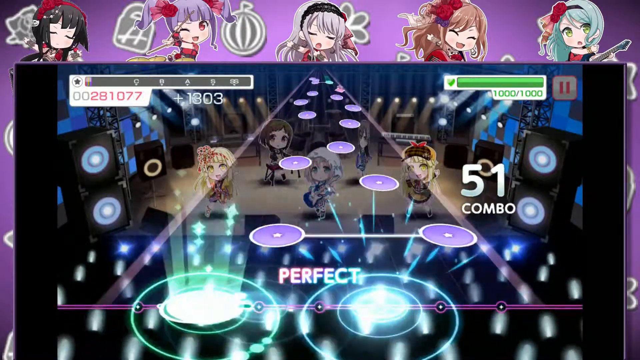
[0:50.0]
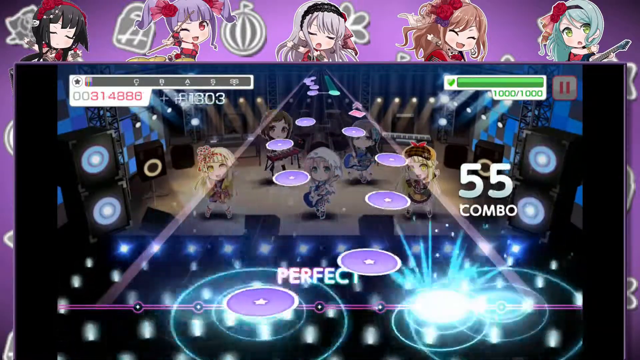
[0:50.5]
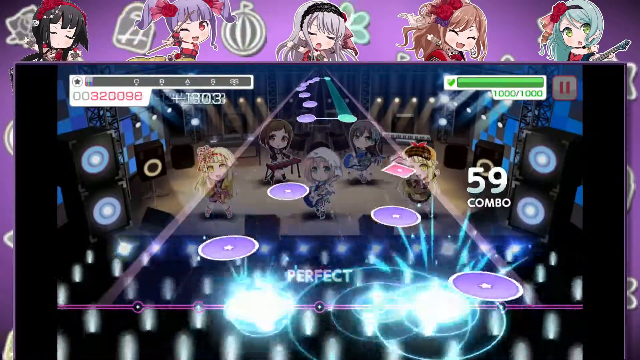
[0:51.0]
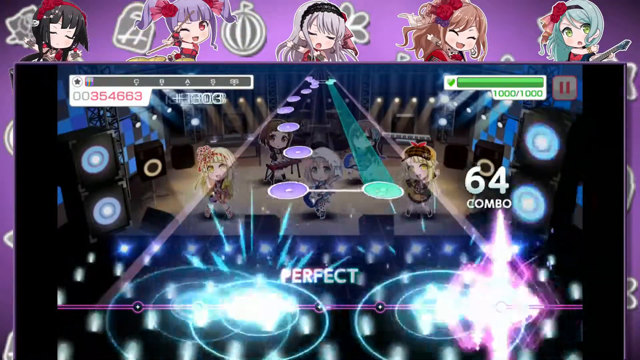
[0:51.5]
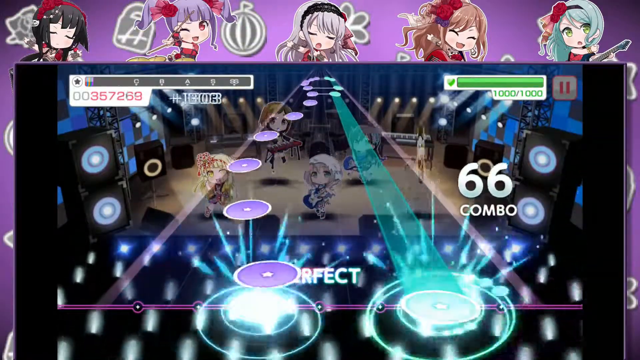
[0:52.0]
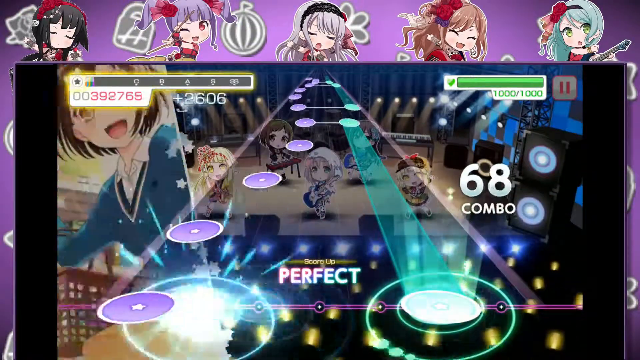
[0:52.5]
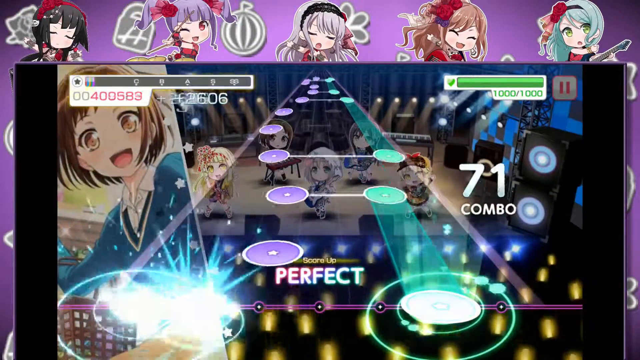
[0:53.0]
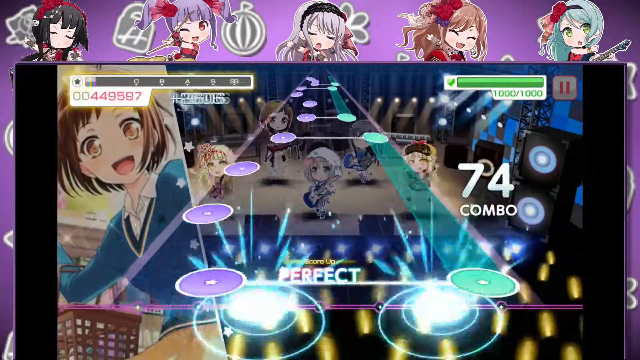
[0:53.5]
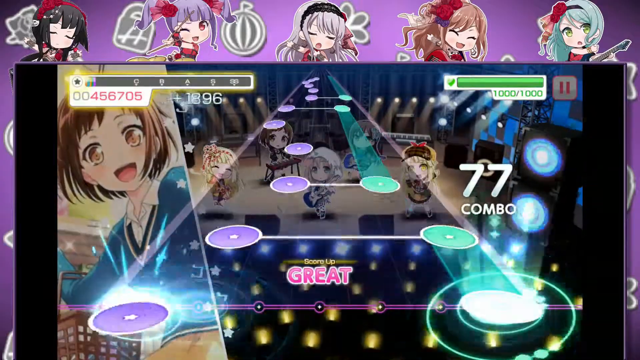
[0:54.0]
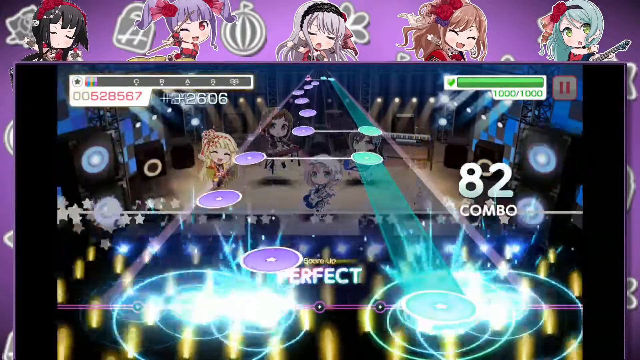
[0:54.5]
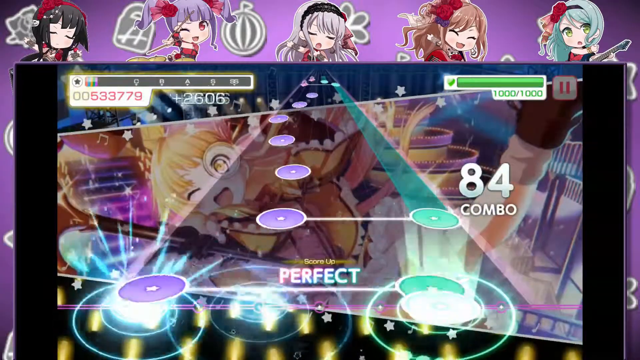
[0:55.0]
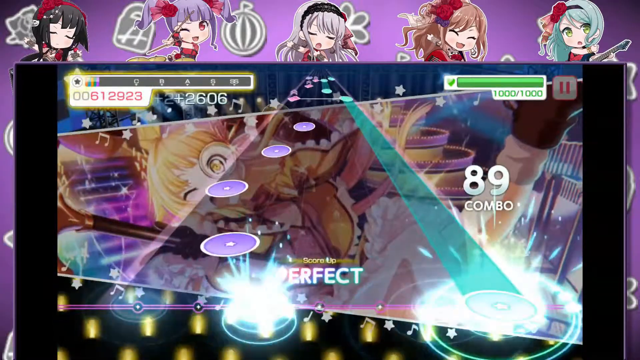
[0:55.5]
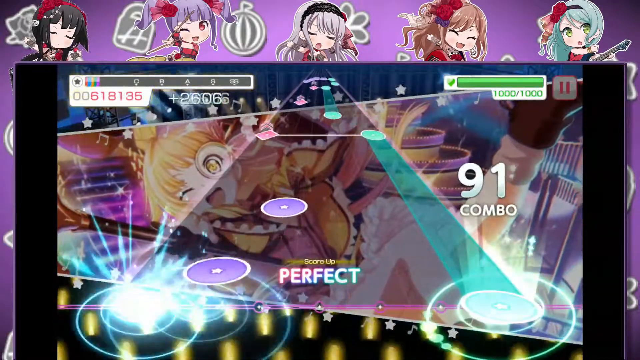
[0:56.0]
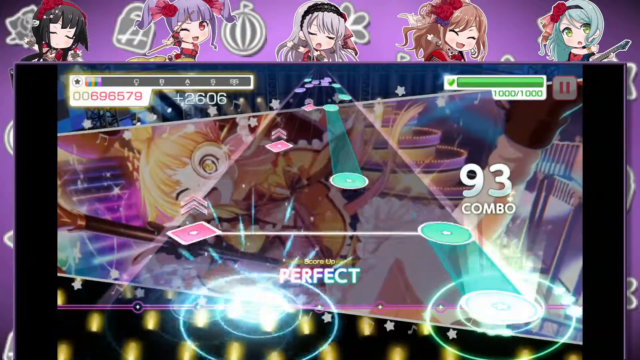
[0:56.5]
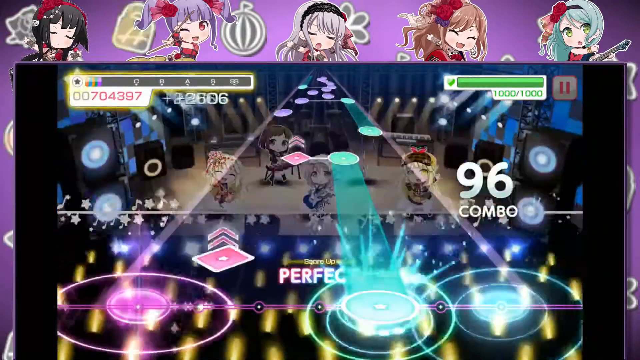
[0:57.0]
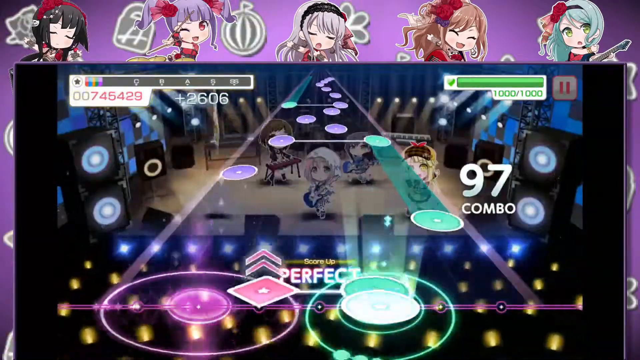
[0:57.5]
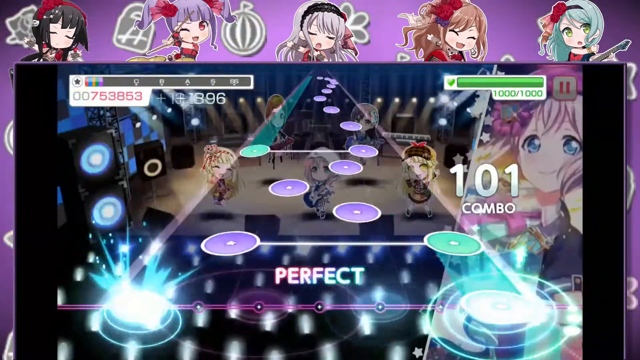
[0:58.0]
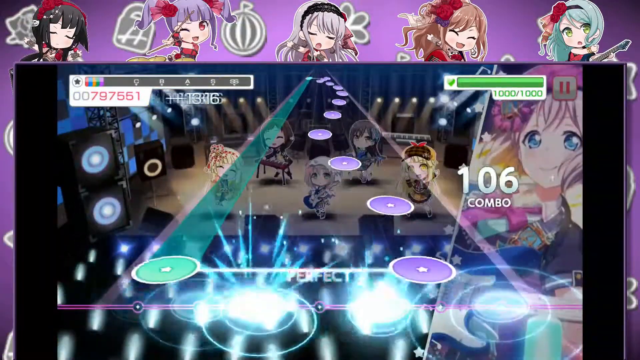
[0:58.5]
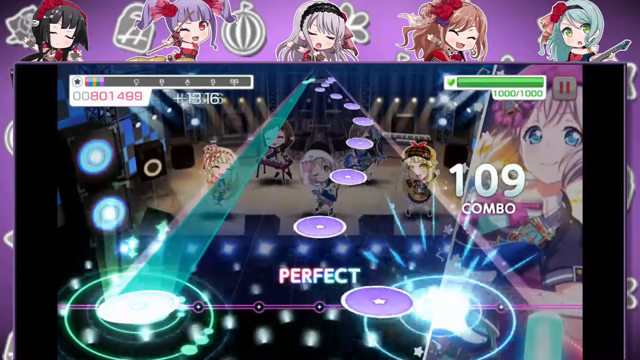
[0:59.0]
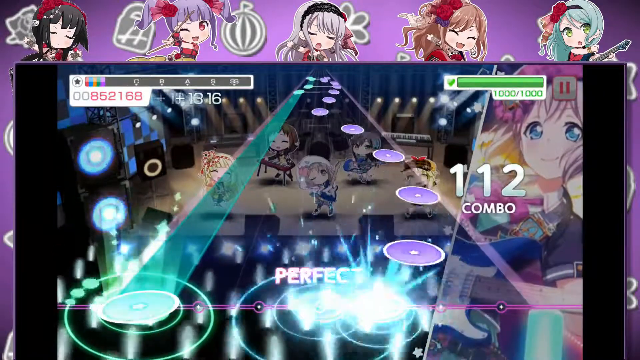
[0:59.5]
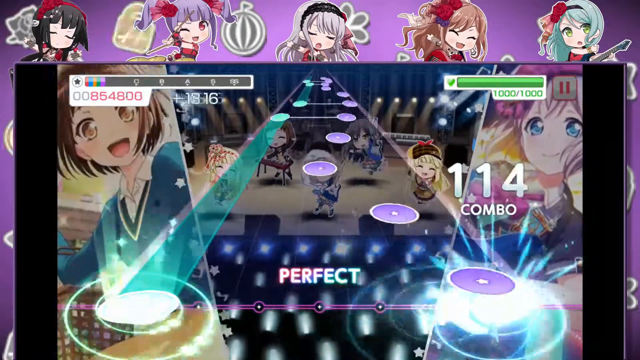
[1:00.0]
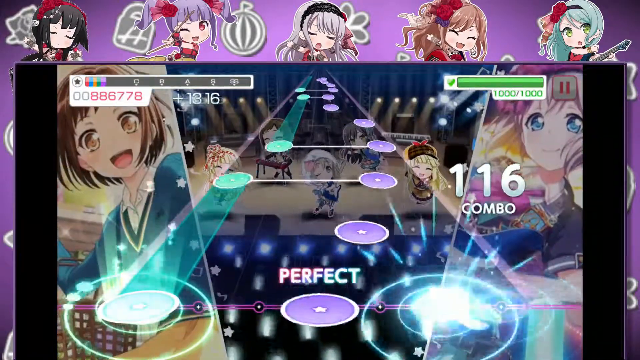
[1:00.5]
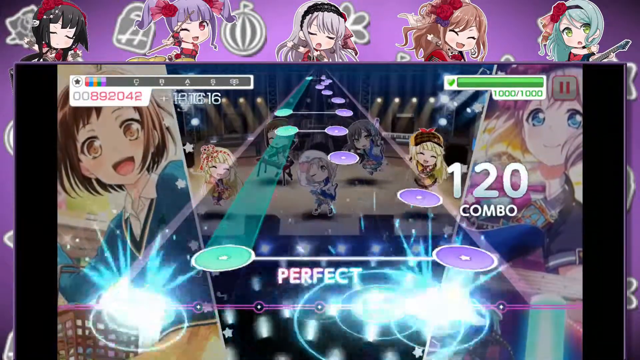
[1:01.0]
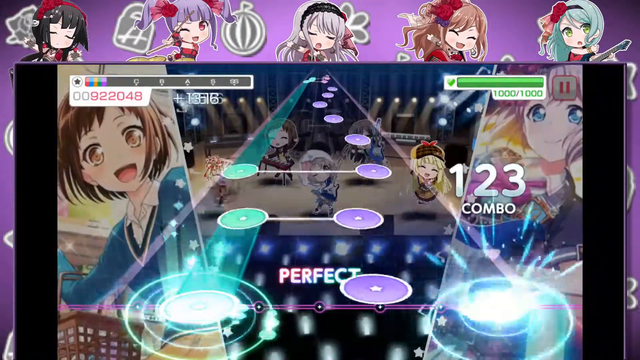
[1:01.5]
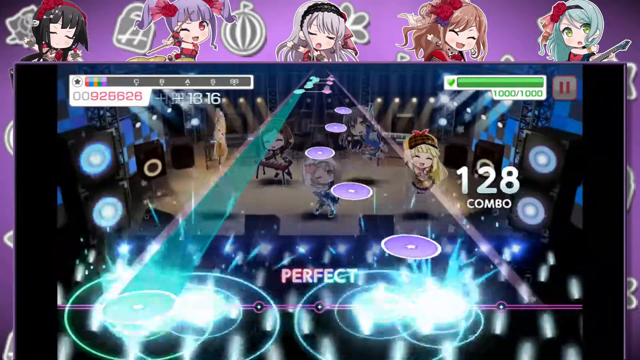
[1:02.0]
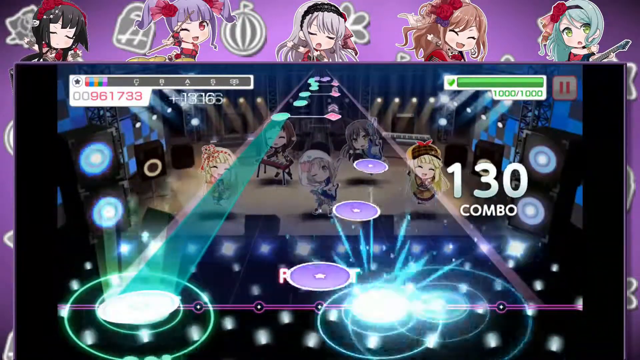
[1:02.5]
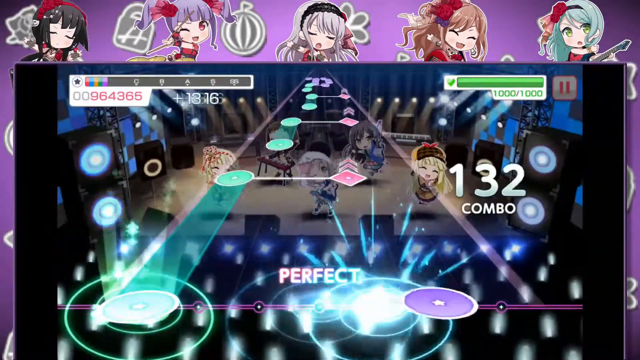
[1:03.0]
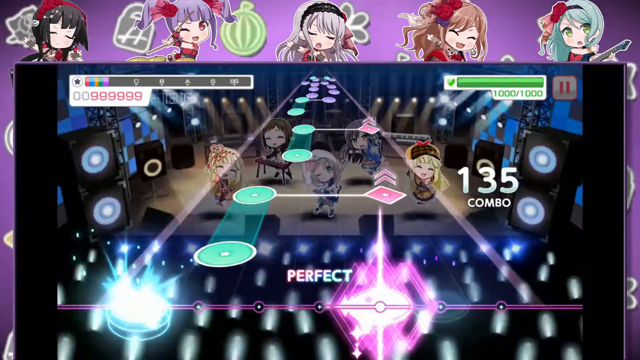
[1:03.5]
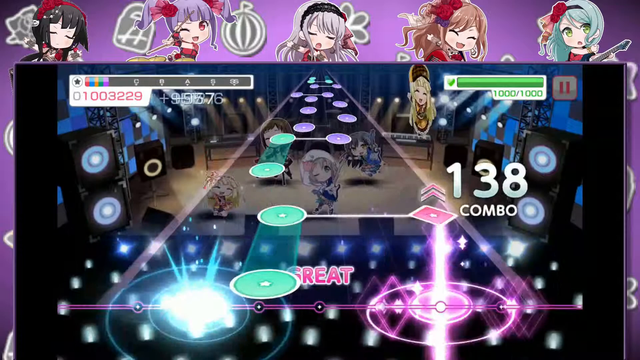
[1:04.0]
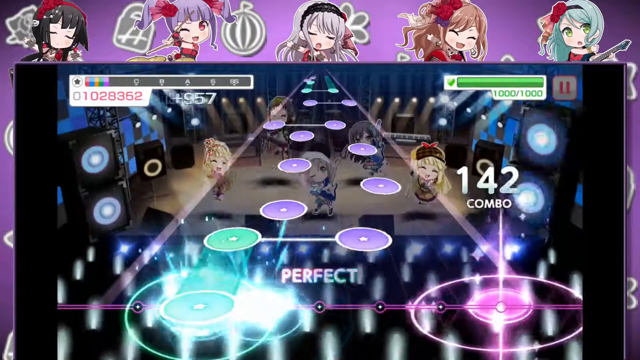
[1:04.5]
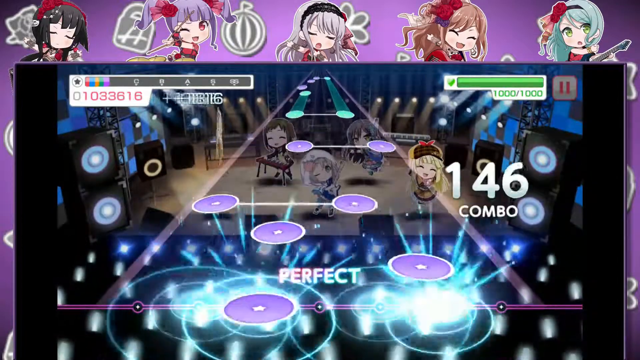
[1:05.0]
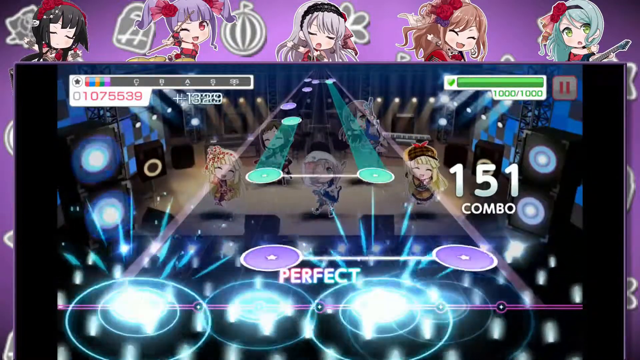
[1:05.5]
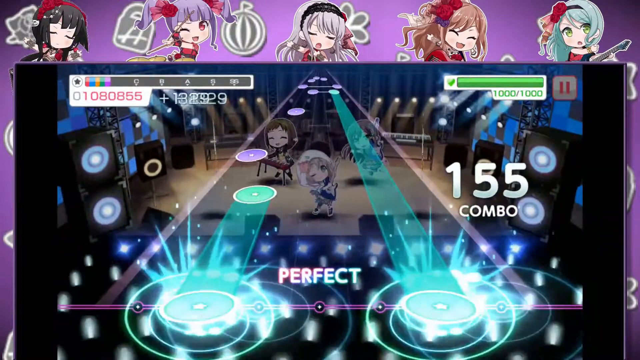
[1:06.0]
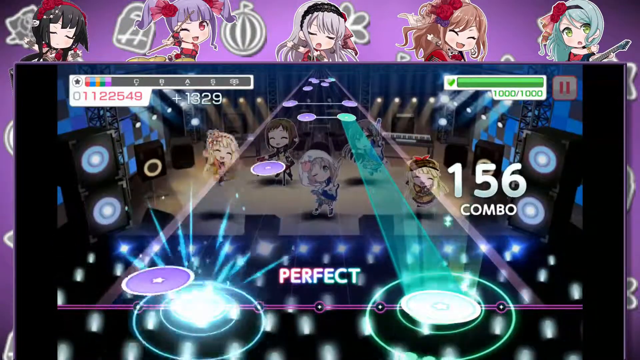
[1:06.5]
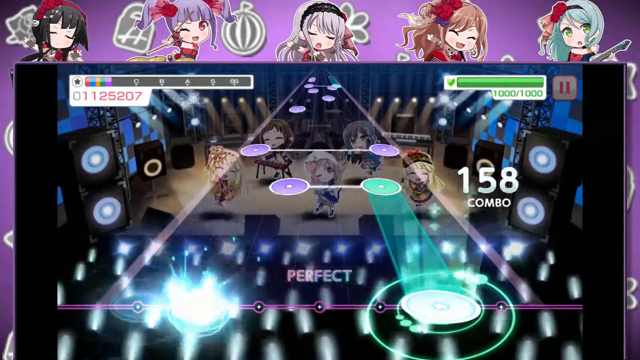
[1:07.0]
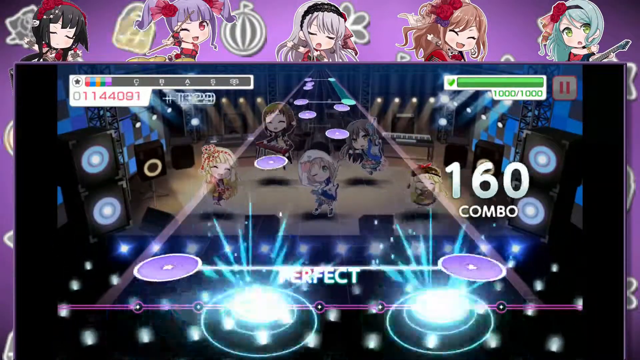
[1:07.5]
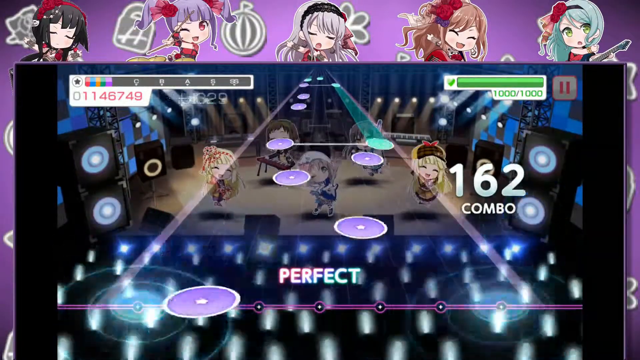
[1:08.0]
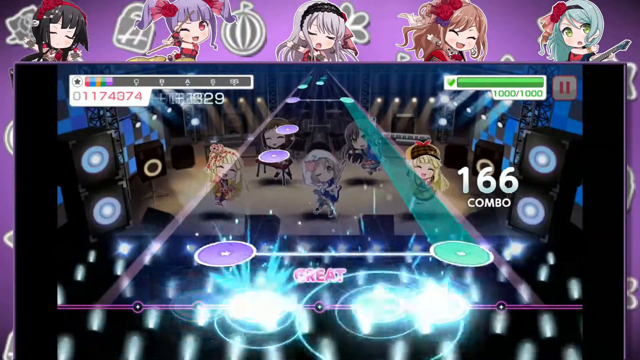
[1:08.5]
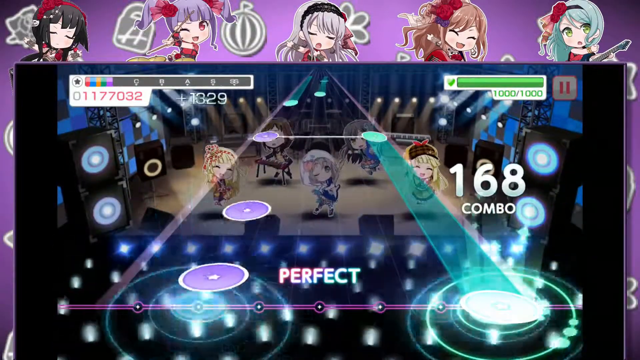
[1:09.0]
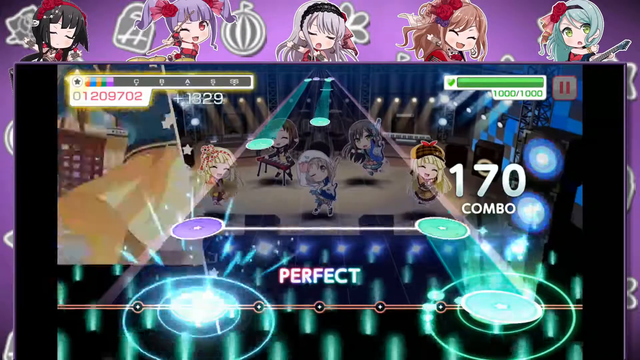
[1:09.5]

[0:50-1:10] A handheld music game is in the middle of a song. The player is possibly button smashing the notes on time to build a perfect combo. Various anime girls, possibly a band, are on stage playing various instruments. In the background of the phone, other anime girls make up the phone's background. As the game progresses, various cut-ins of anime girls appear; each seems to be having a happy moment while playing her instrument, and some appear together. A brown-haired girl in a blue shirt and a pink-haired girl are visible. More points accumulate, and the cut-ins keep appearing again and again.